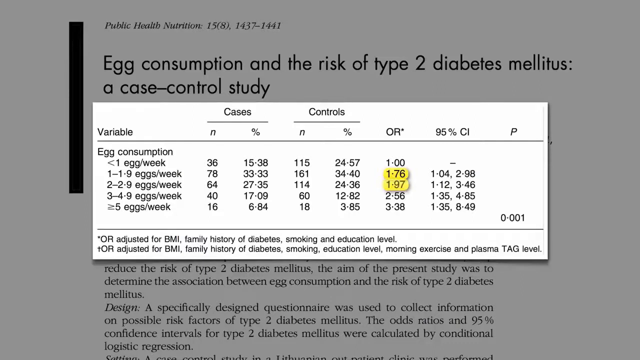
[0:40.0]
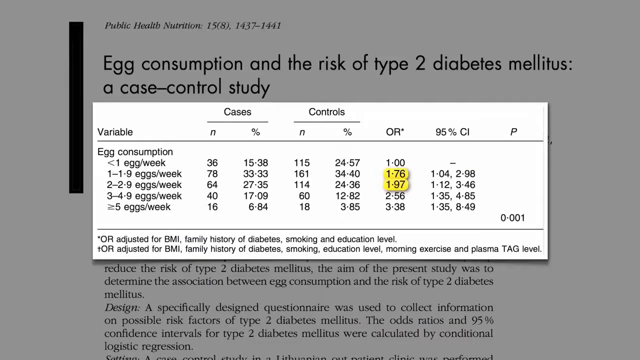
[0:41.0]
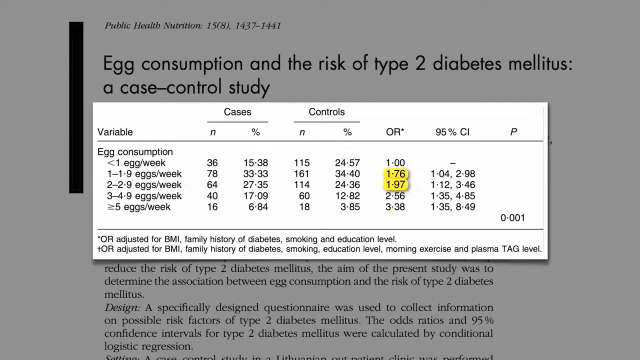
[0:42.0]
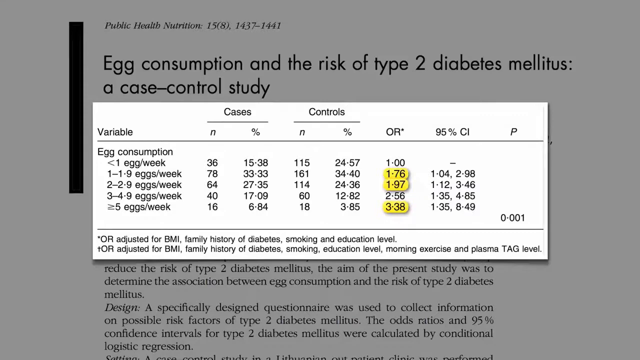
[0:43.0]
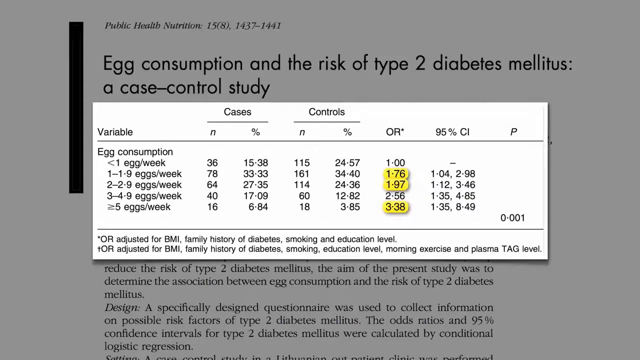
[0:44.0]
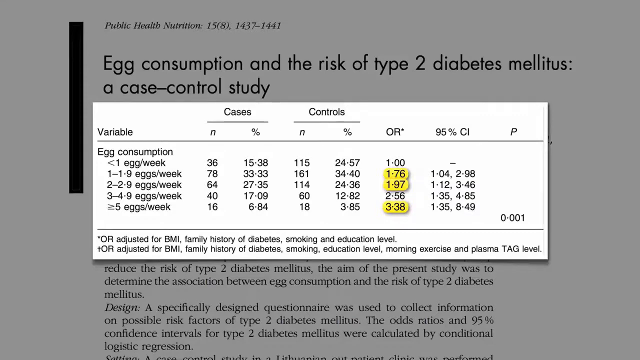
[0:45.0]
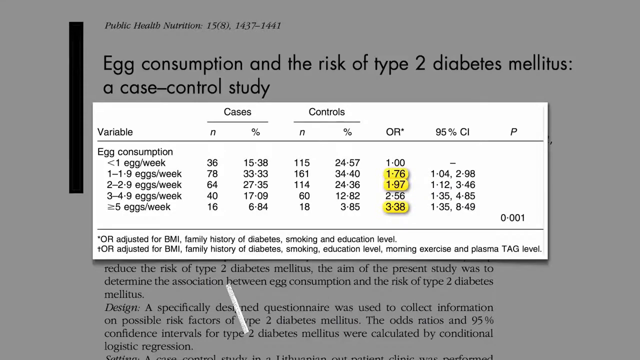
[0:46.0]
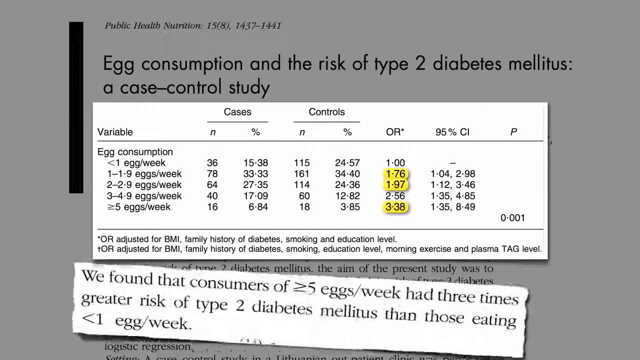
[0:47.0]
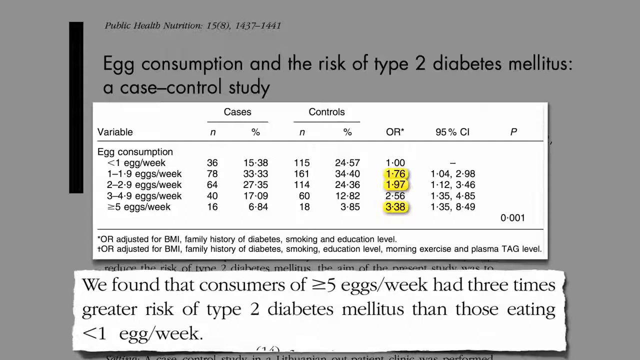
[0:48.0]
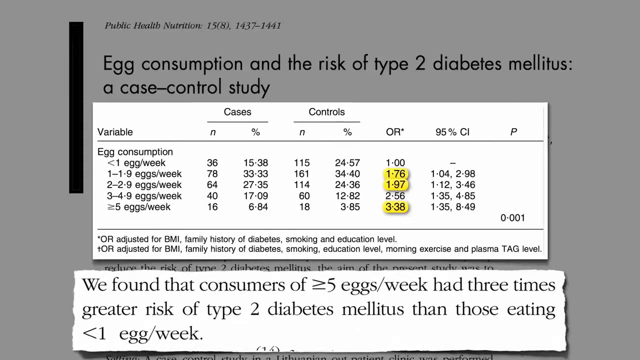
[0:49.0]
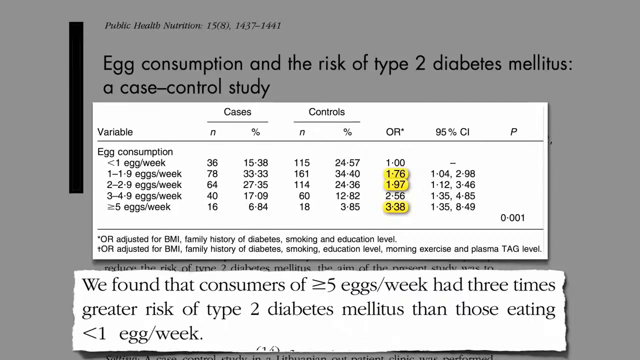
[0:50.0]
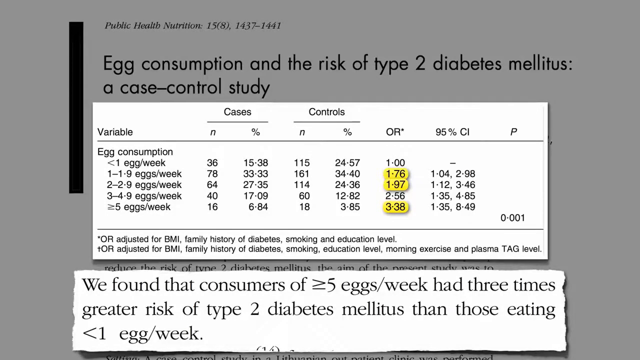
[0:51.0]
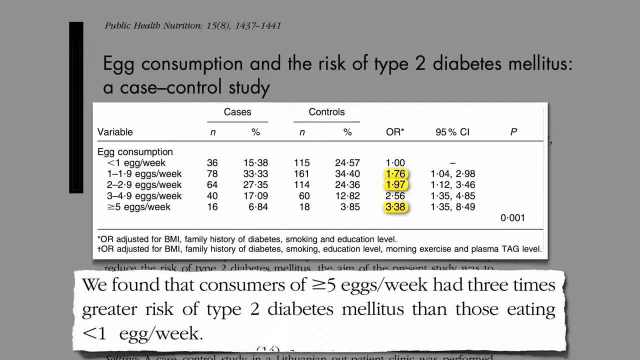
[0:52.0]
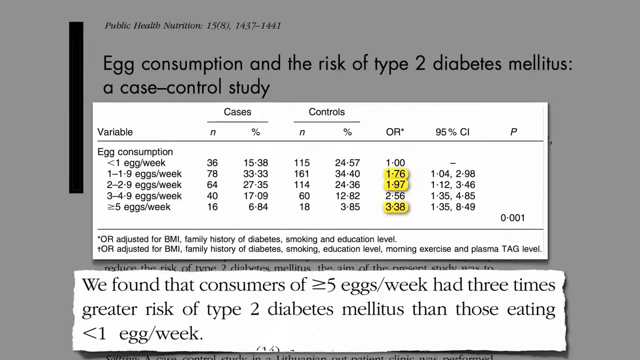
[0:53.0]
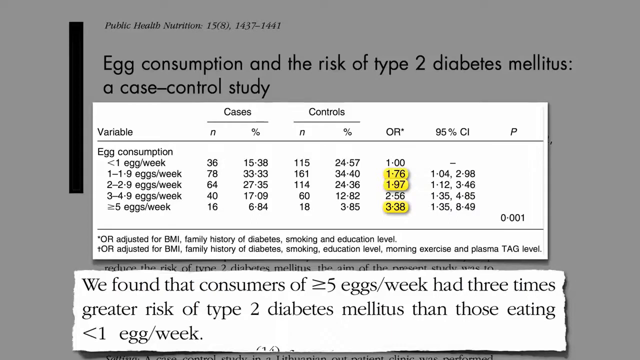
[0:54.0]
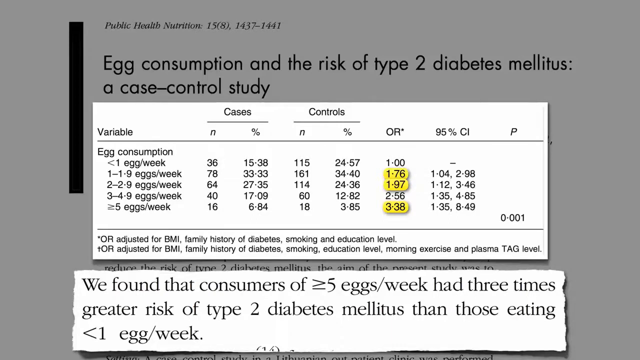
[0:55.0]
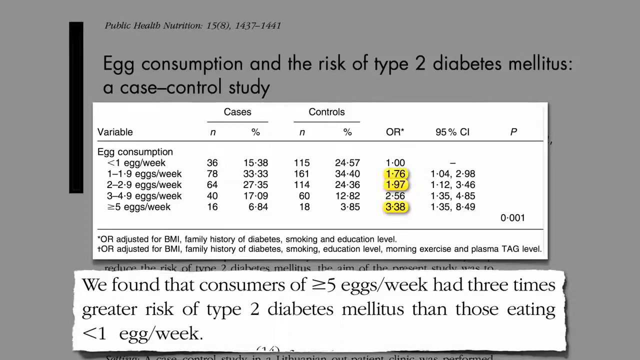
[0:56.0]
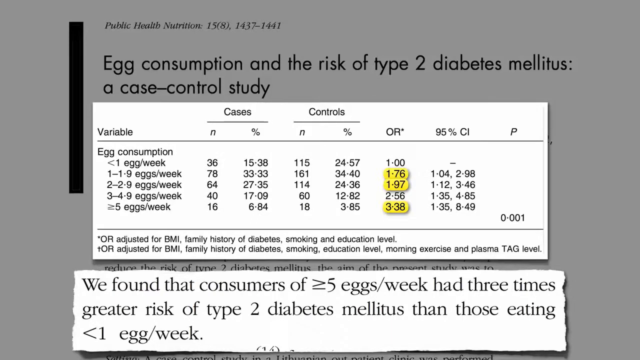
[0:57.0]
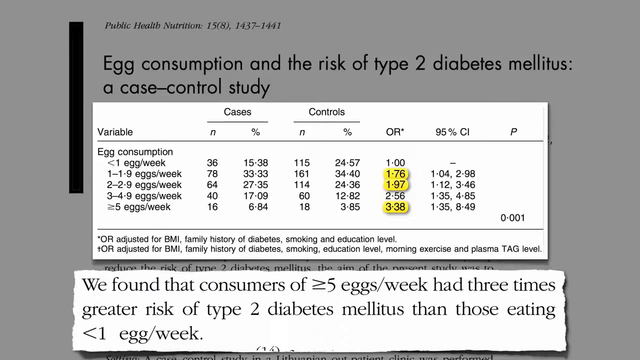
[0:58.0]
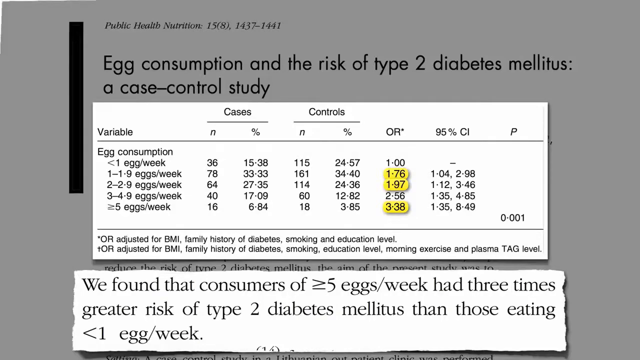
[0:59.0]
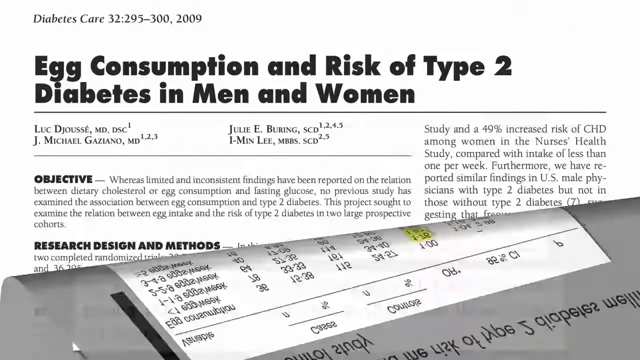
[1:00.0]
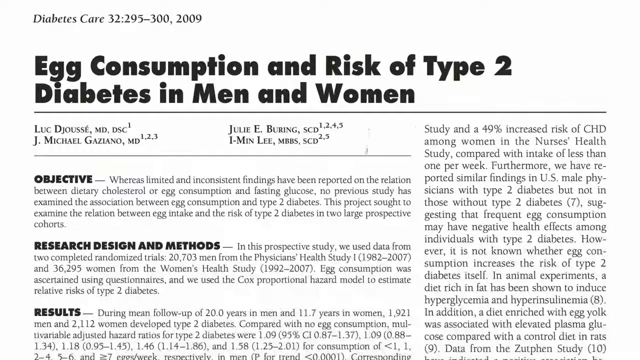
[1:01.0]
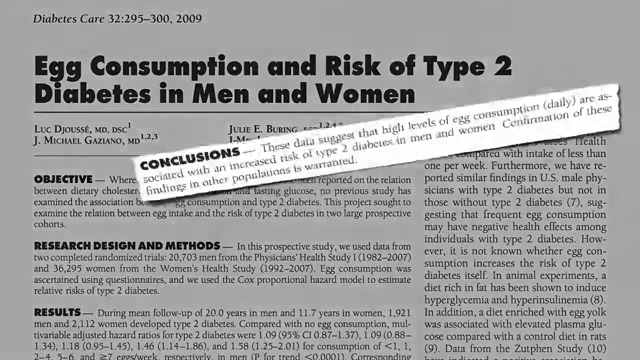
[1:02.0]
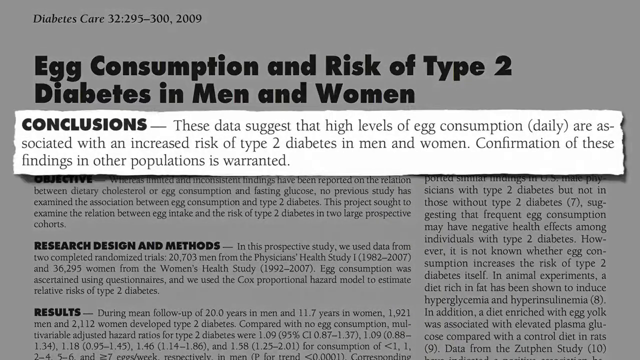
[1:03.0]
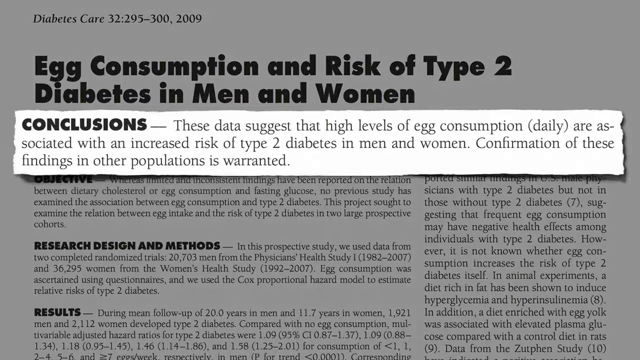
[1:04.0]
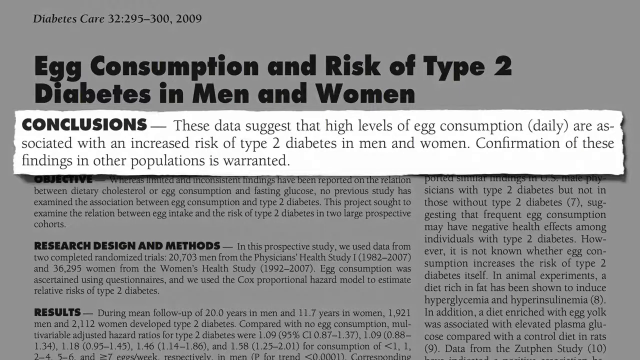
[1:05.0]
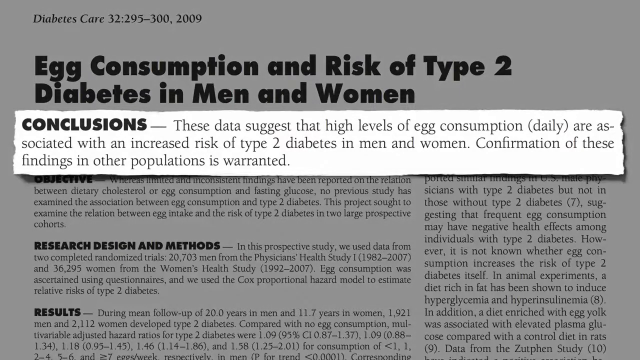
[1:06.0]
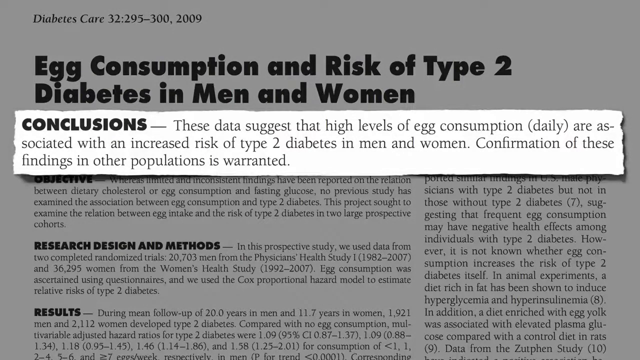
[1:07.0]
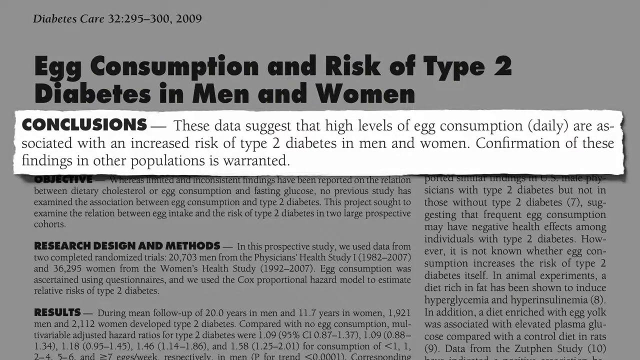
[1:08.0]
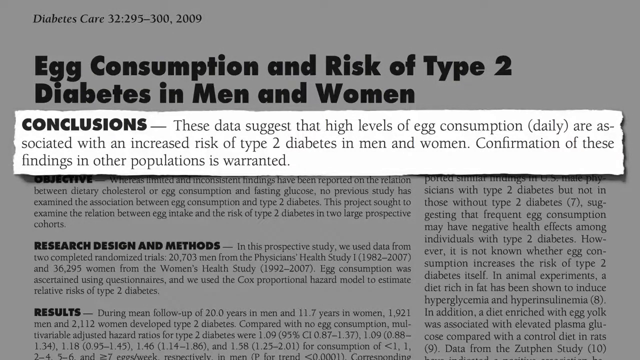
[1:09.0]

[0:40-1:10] Three sections on the right side of the chart are highlighted; the highlighted numbers are 1, 1-76, 1-97 and 3-38. Information from the article appears at the bottom: "we found that consumers of five or more eggs per week had three times greater risk of type 2 diabetes mellitus than those eating less than one egg per week." The scene changes to another article whose title, at the top left, is "egg consumption and risk of type 2 diabetes in men and women." A section of the article is presented in front, reading "Conclusions: these data suggest that high levels of egg consumption daily are associated with an increased risk of type 2 diabetes in men and women. Confirmation of these findings and other populations is warranted."